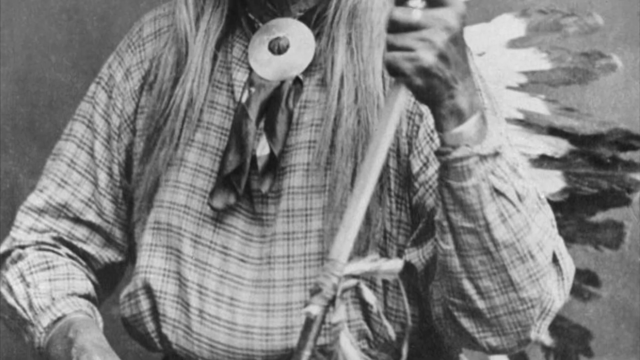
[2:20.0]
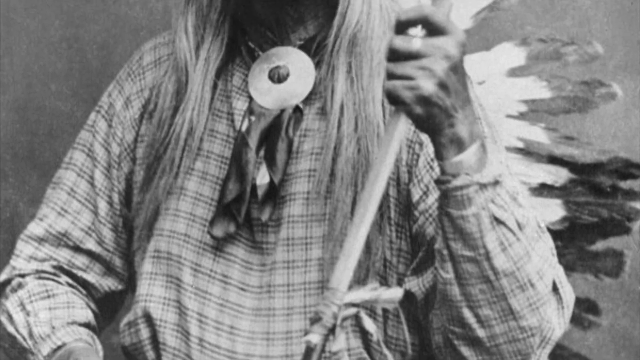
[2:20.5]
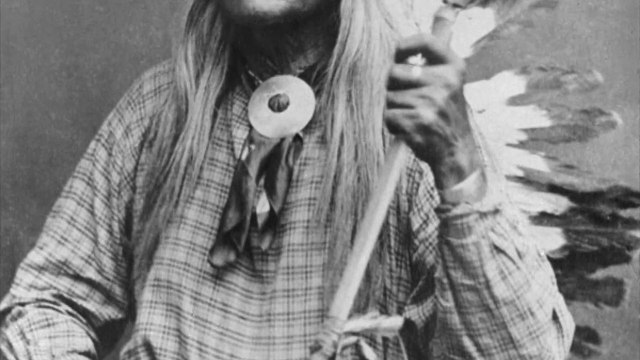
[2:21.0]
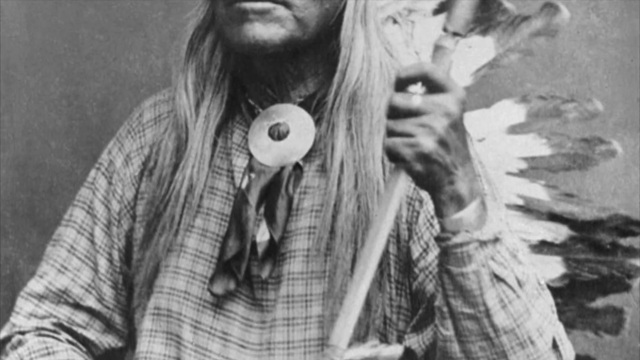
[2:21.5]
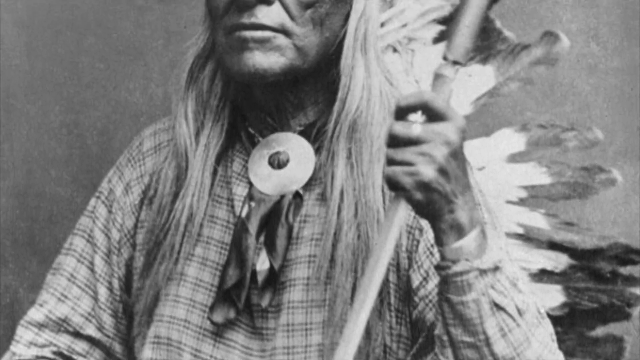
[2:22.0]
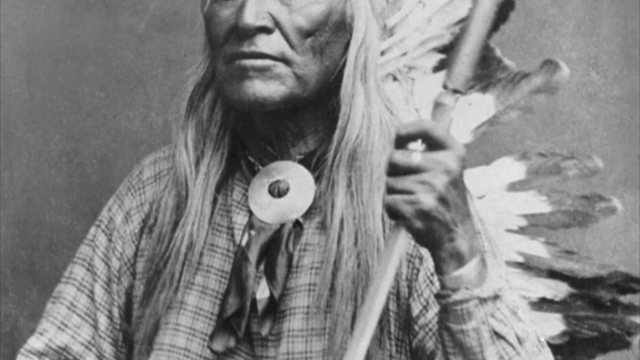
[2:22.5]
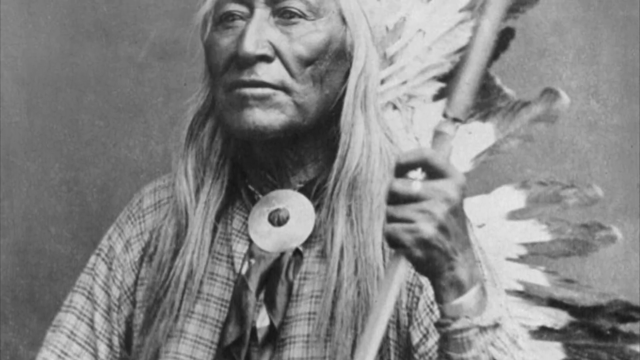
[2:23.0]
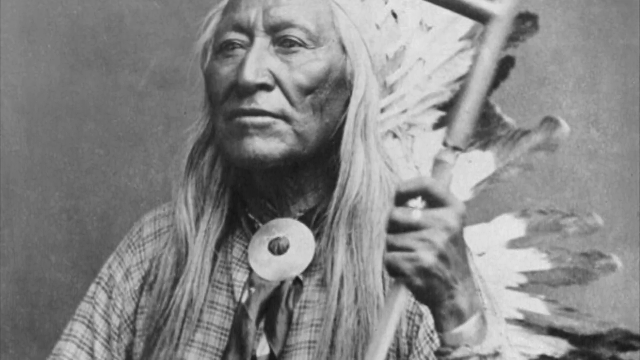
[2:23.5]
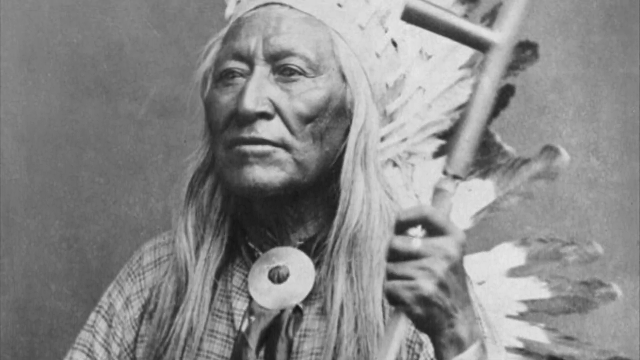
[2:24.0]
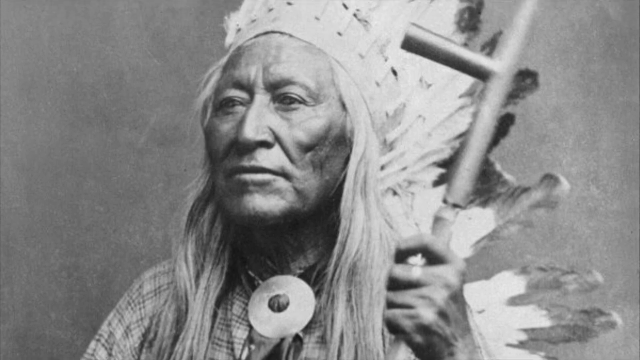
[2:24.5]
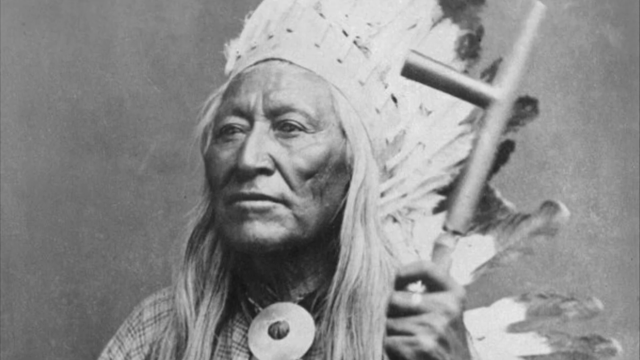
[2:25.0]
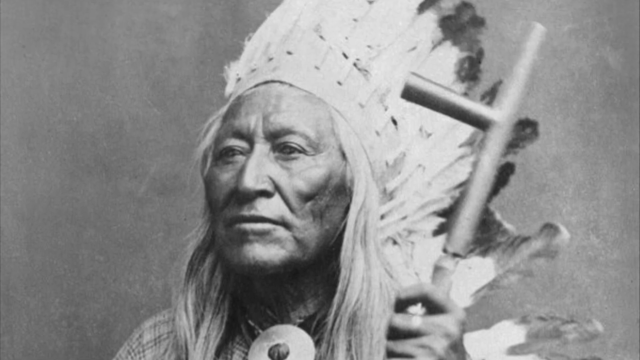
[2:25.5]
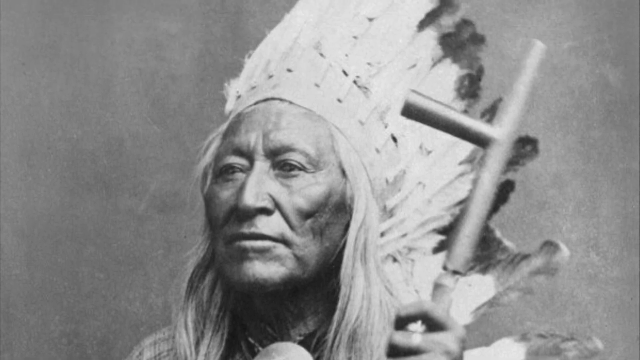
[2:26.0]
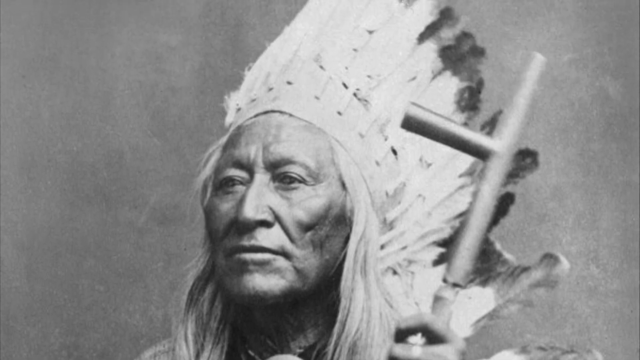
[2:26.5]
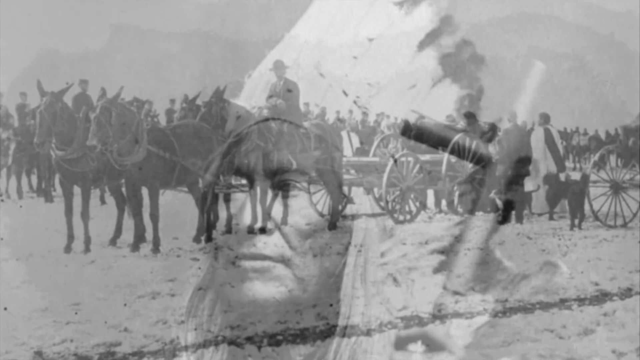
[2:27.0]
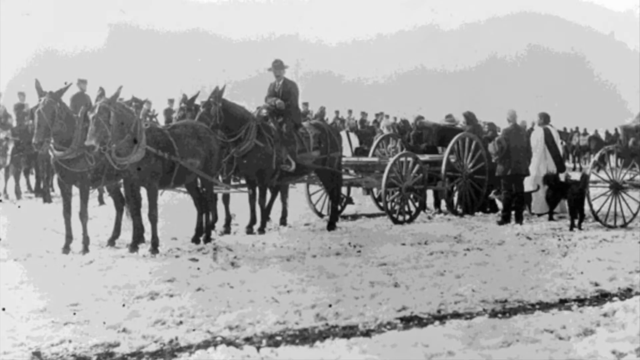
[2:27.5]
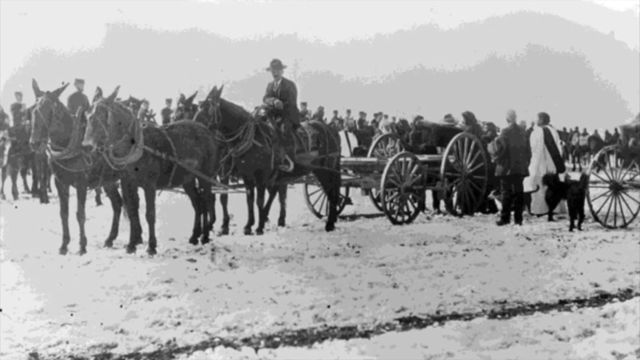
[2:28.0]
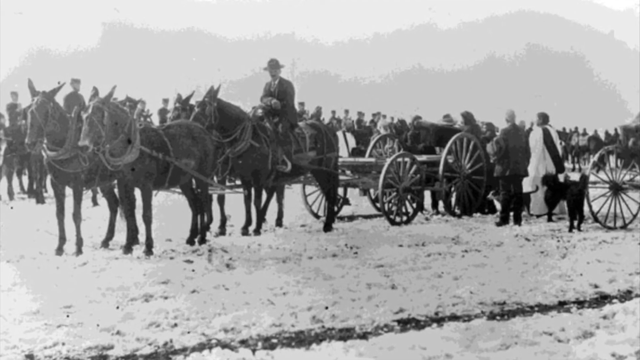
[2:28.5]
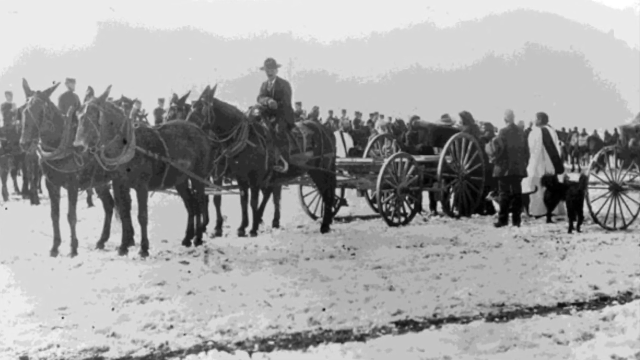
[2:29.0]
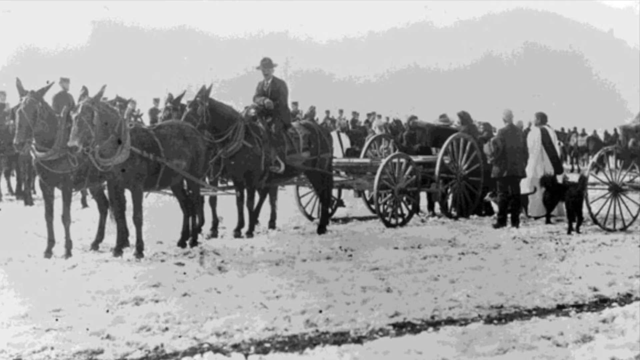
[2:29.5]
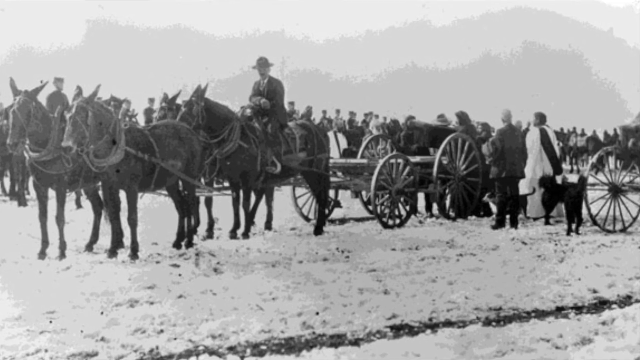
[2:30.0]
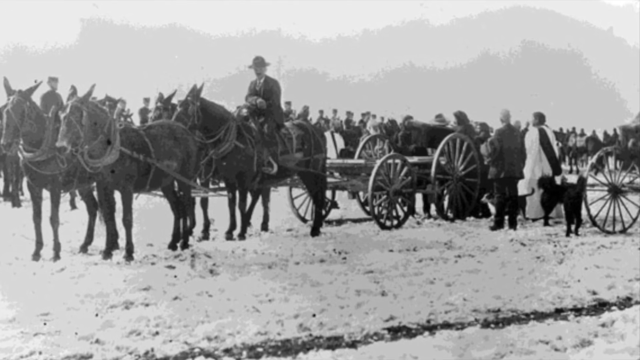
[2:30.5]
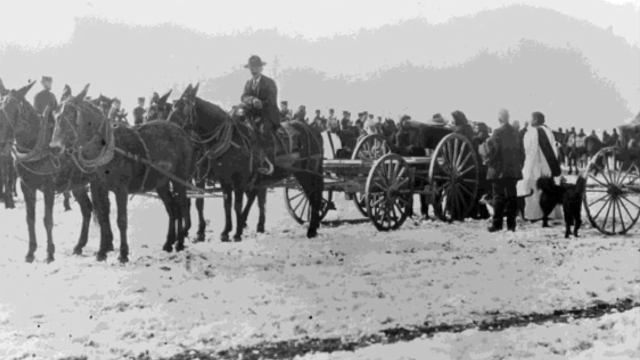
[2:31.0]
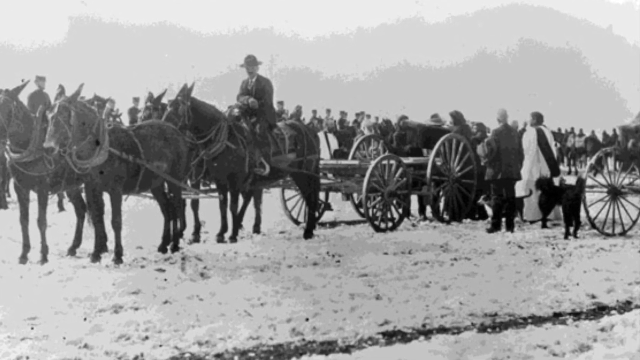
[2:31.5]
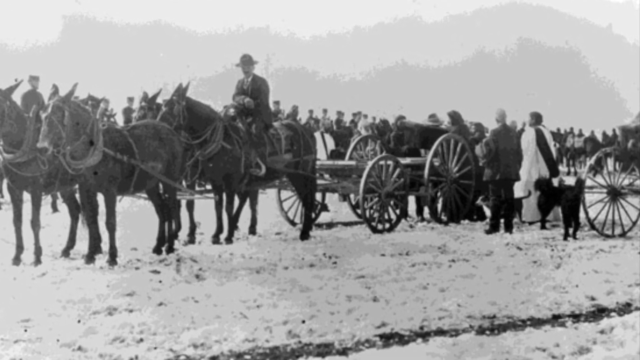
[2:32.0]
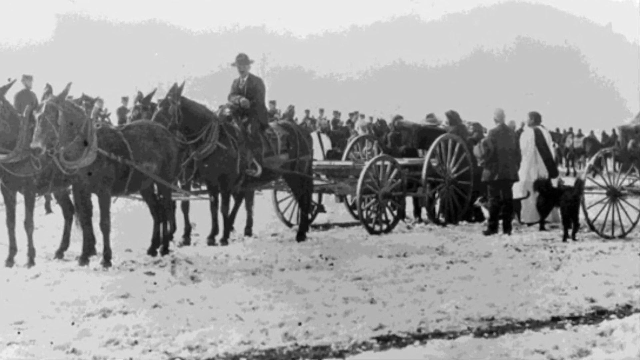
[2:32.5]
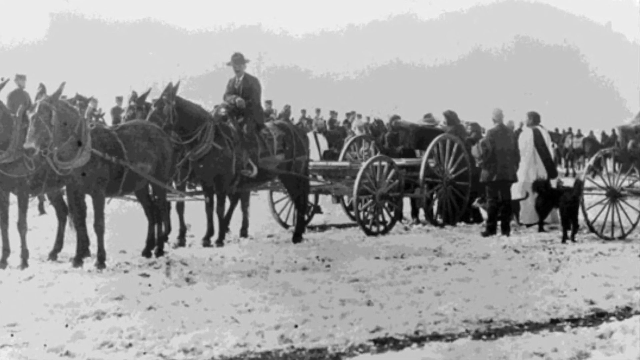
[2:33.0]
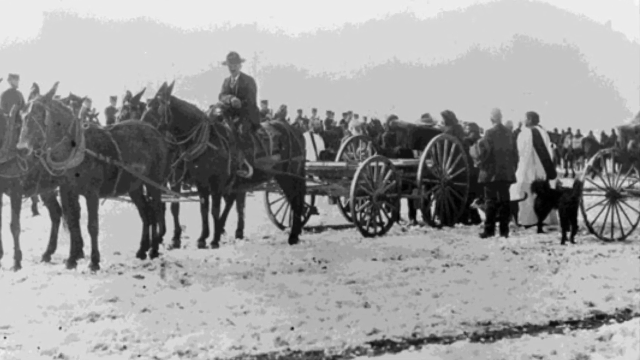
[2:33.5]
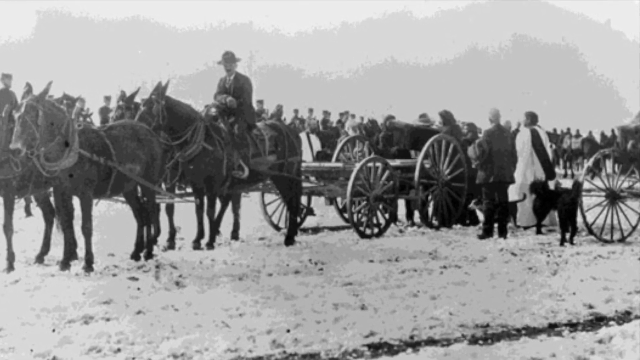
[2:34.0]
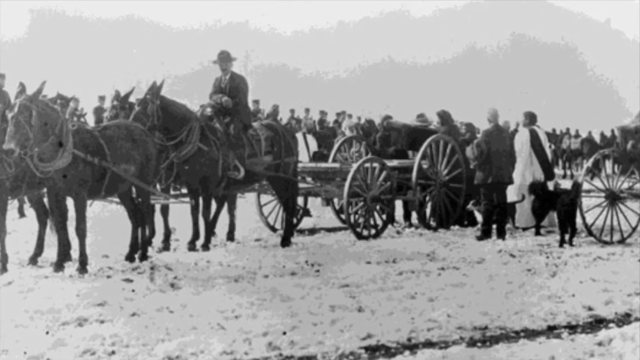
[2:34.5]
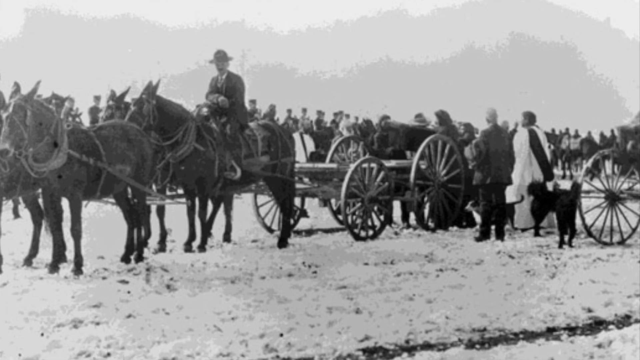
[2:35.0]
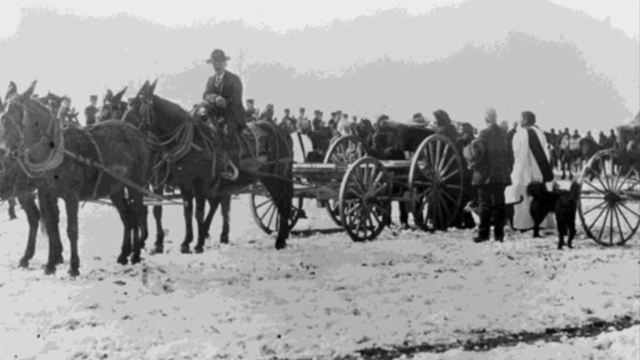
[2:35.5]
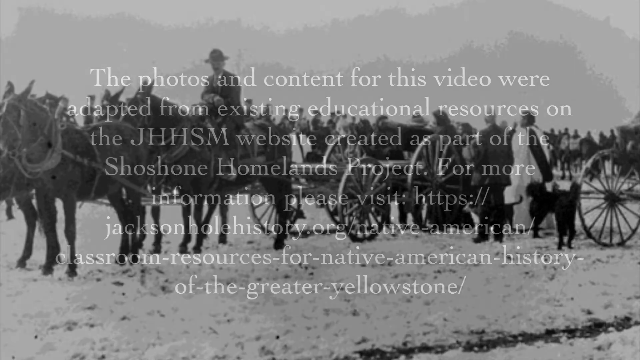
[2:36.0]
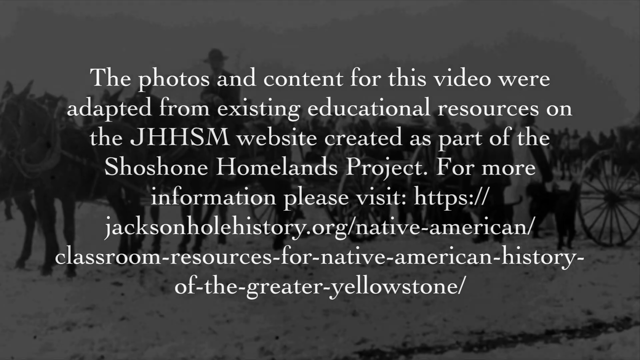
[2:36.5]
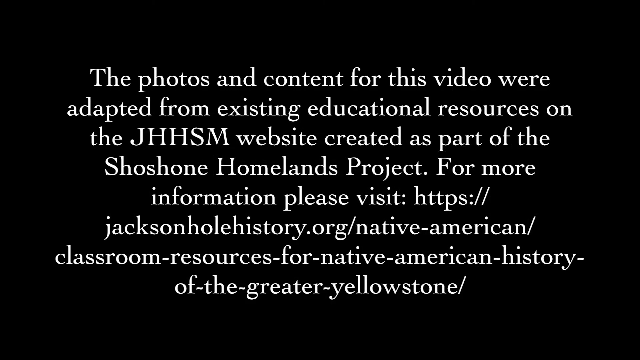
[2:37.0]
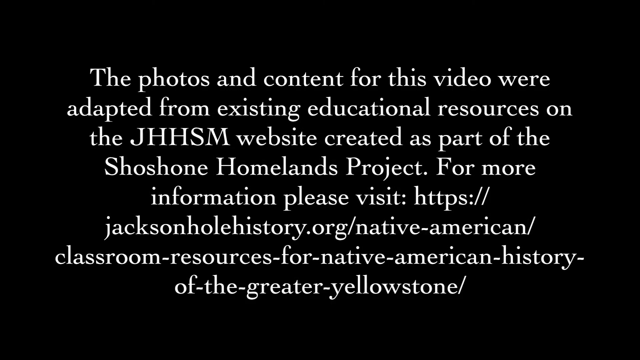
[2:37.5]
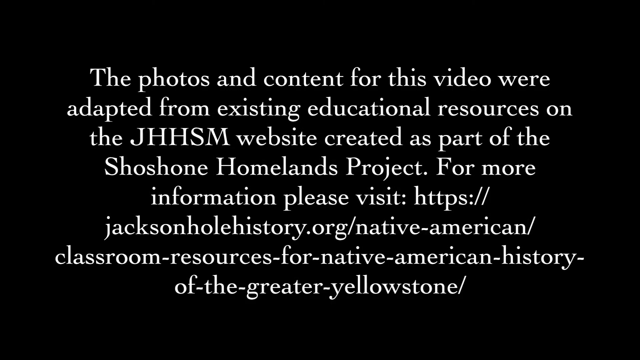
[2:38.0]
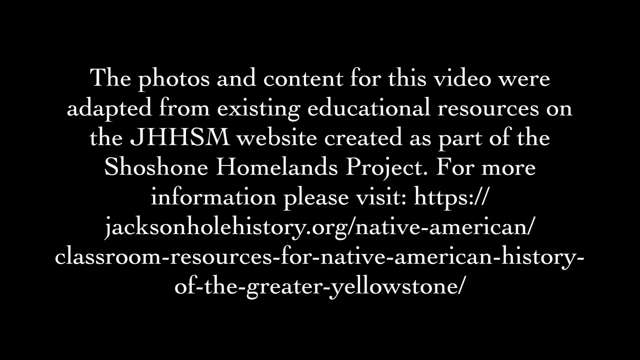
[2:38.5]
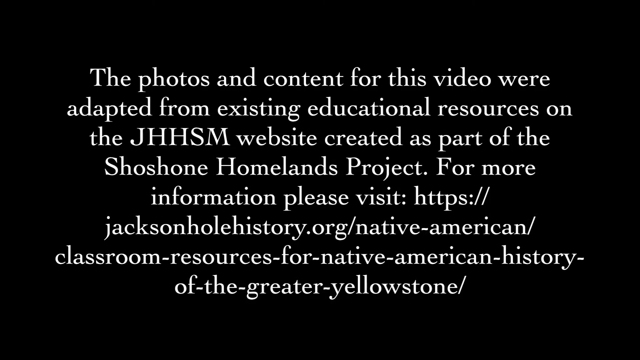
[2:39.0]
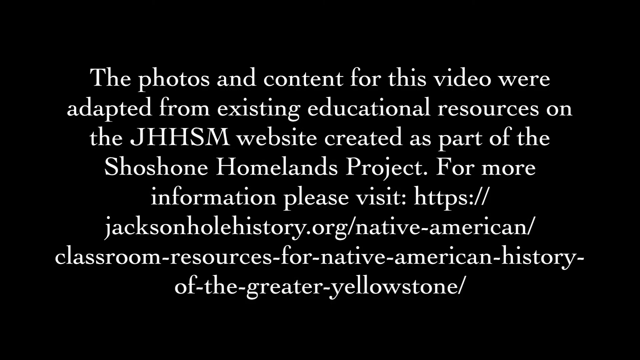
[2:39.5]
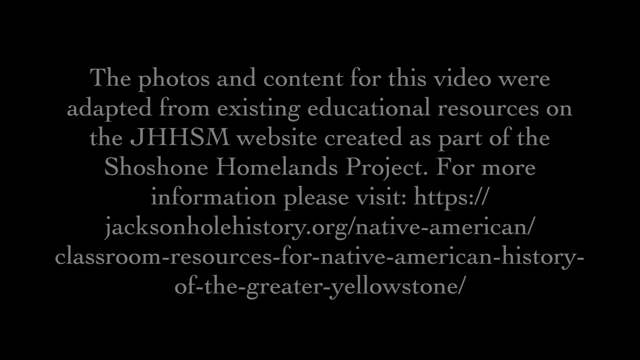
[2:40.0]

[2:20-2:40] An Indian man sits in a chair posing for a picture. He holds a large peace pipe and wears a headdress indicating that he is a chief. The next image shows infantrymen or cavalrymen from the army who appear to be pulling large wagons with military equipment on them. The video is made of still images that appear to be from the mid to late 1800s, showing people living and settling in America. At the end, text says "the photos and content for the videos were adapted from existing educational resources on the JHHSM website created as part of the Shoshone Homelands Project," followed by a website to go to for more information.